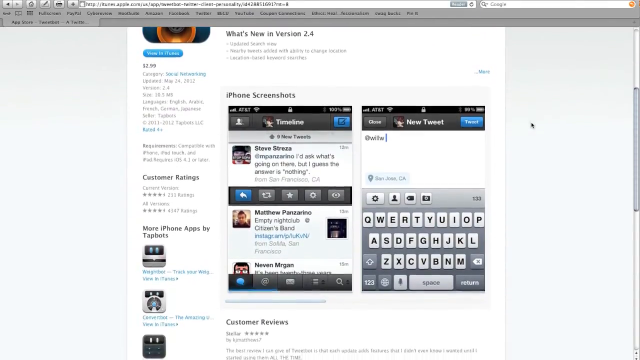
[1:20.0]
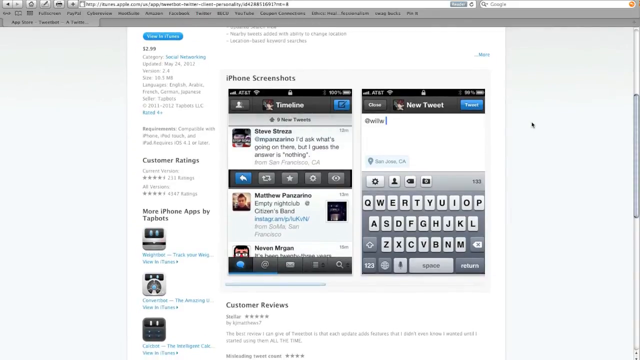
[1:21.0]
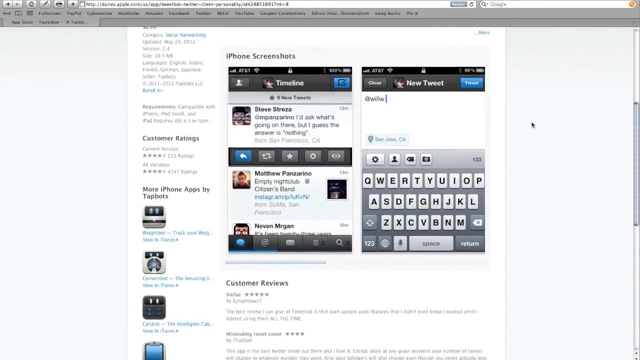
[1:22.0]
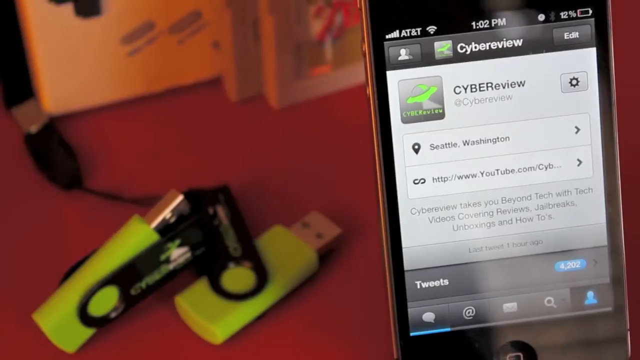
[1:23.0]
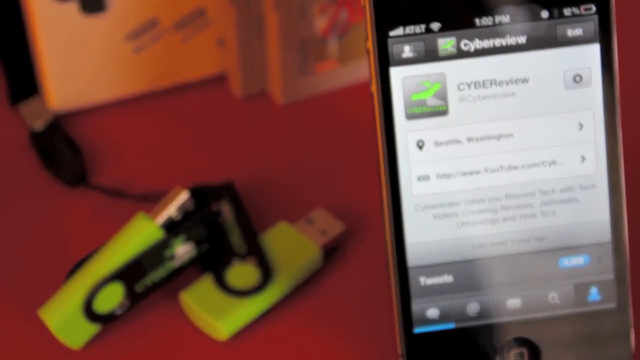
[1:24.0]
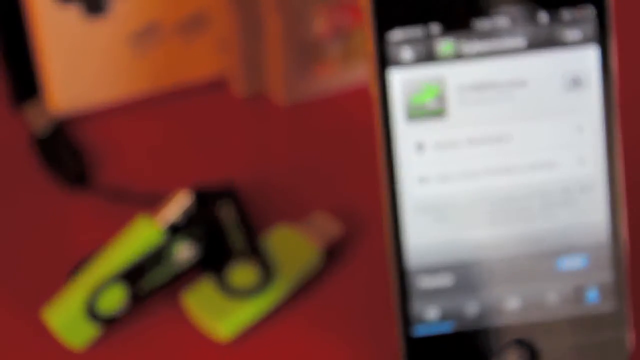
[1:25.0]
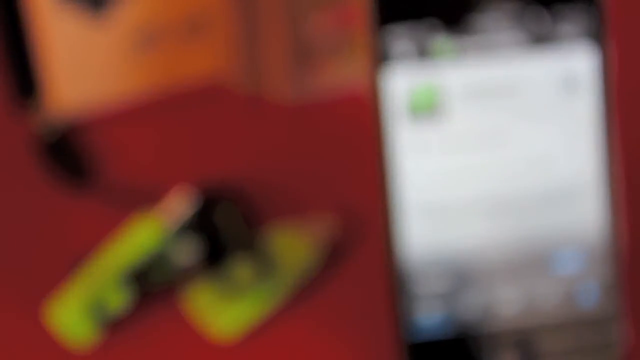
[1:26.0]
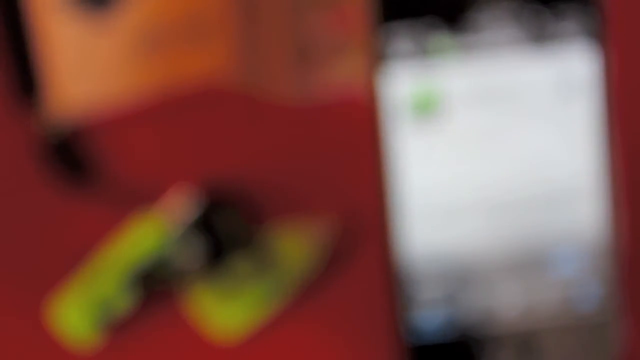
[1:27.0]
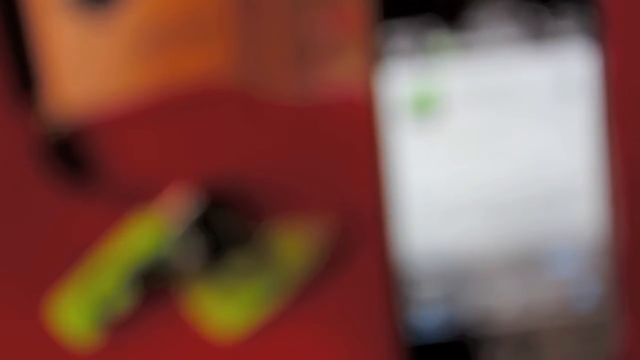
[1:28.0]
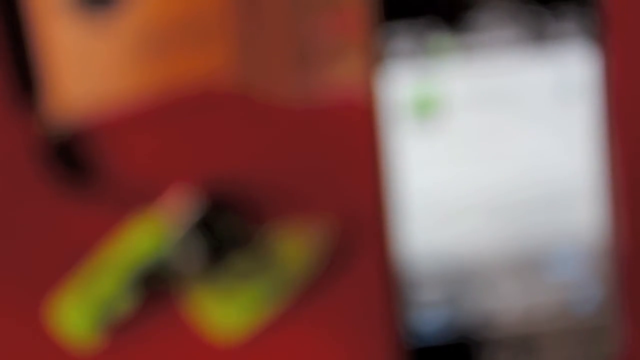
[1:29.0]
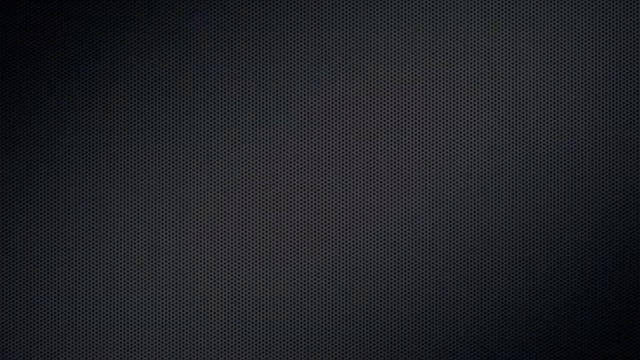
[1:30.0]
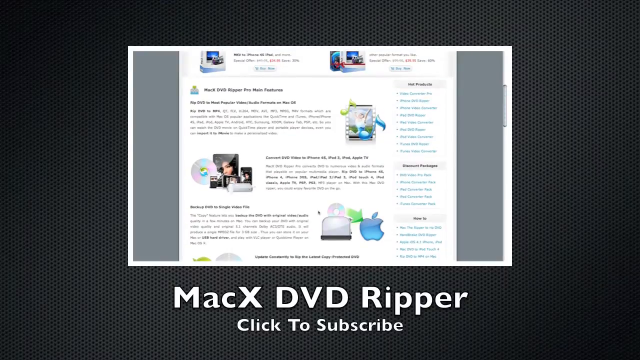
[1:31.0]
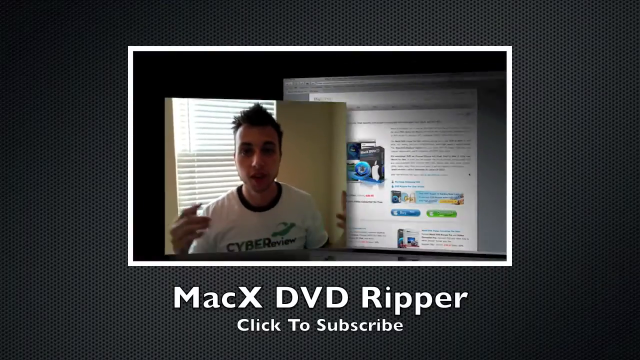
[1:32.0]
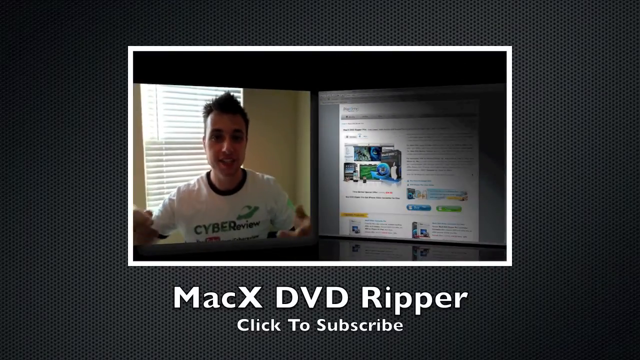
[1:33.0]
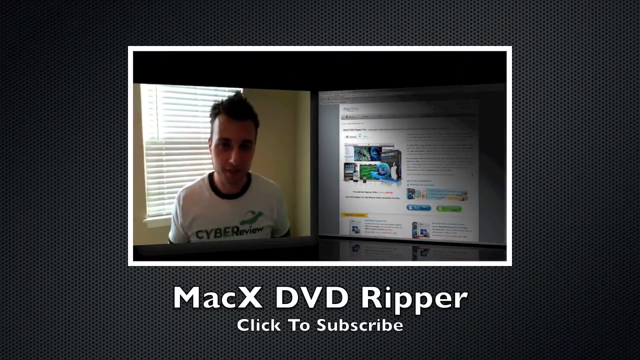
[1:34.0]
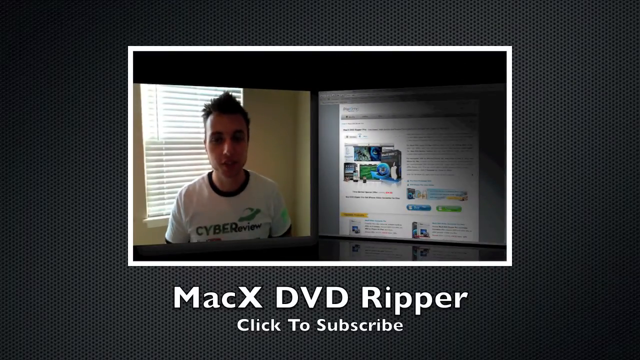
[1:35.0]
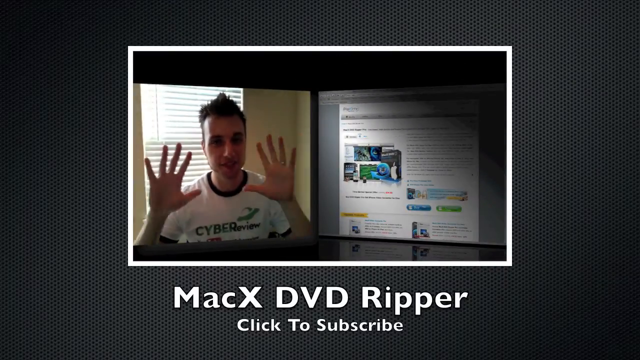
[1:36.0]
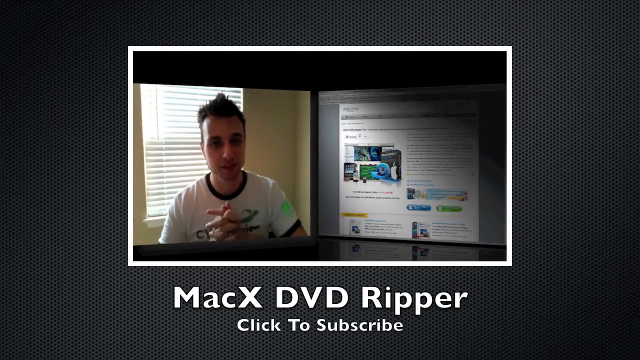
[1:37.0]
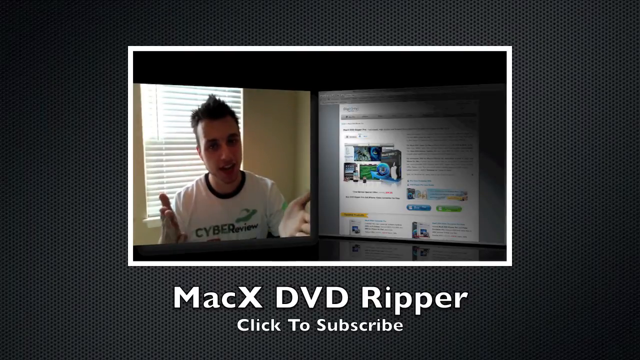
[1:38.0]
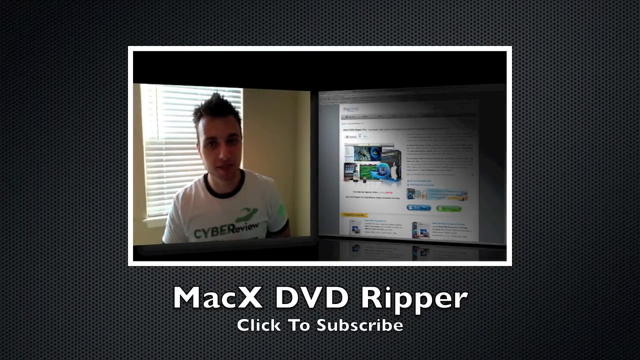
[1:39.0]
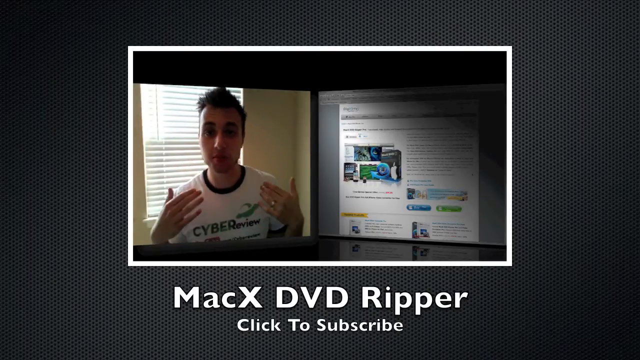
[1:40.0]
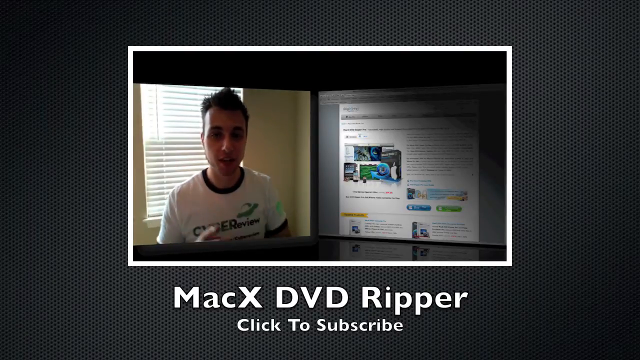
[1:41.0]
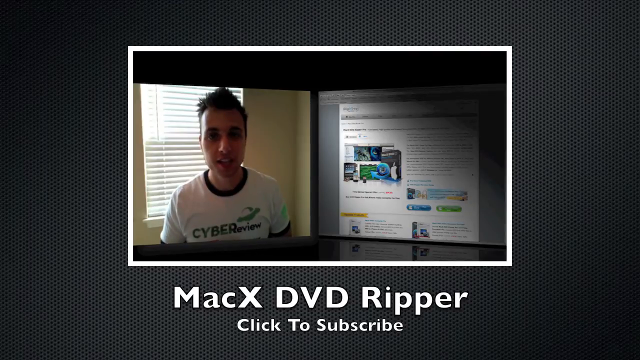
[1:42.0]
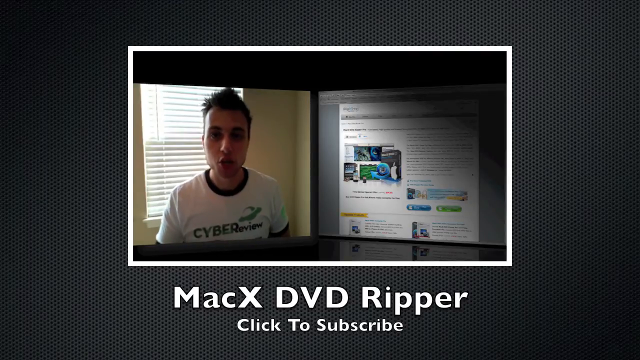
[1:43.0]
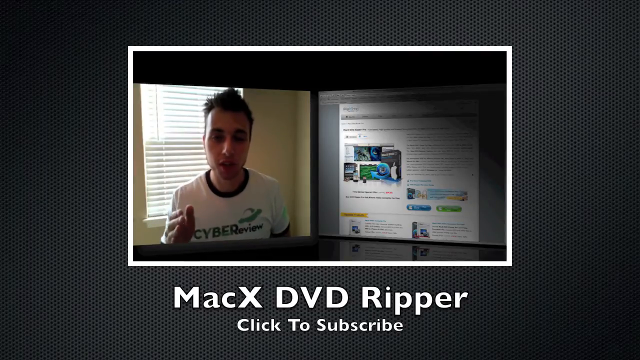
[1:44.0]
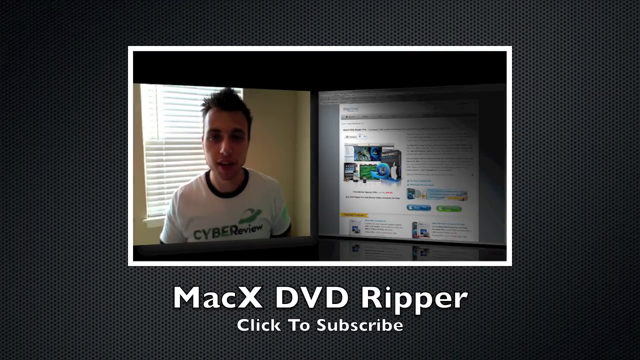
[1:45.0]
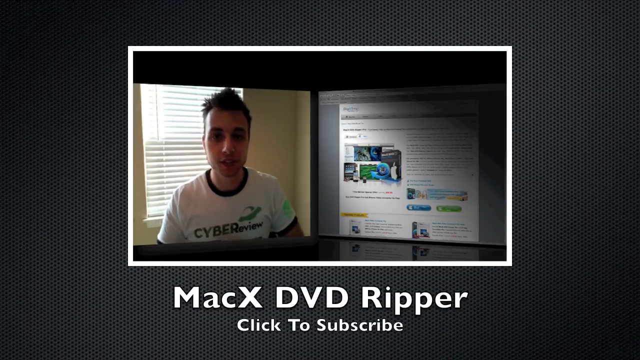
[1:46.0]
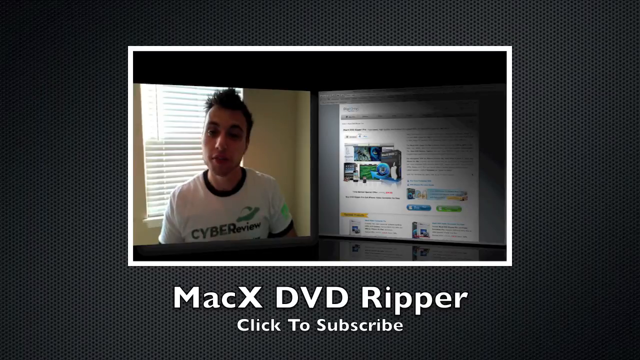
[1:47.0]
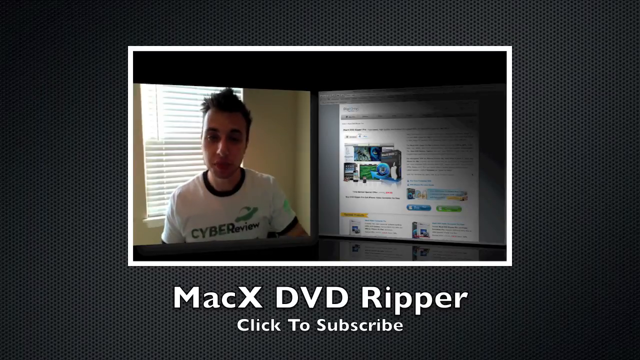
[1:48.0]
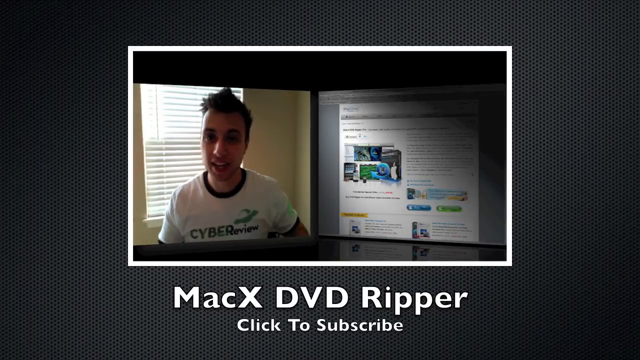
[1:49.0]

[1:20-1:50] A web page shows a number of electronics with facial images on them, like a picture of a duck; they seem to have eyes and mouths. At the very top it says "what's new in version 2.4," followed by a breakdown, and two images in the center of the screen show iPhone screenshots with new tweets and timelines. The author scrolls down the page and goes back to the Cyber Review image on his phone, and the whole image goes very fuzzy and zooms out. Then the screen shows "Mac X DVD ripper, click to subscribe." A young boy pops up on screen in what appears to be a commercial for the Mac X DVD ripper; his shirt is labeled "cyber review."